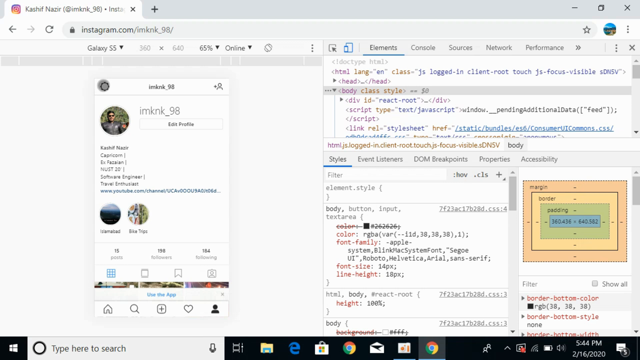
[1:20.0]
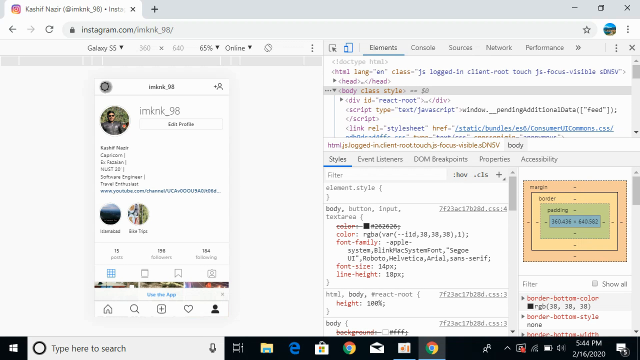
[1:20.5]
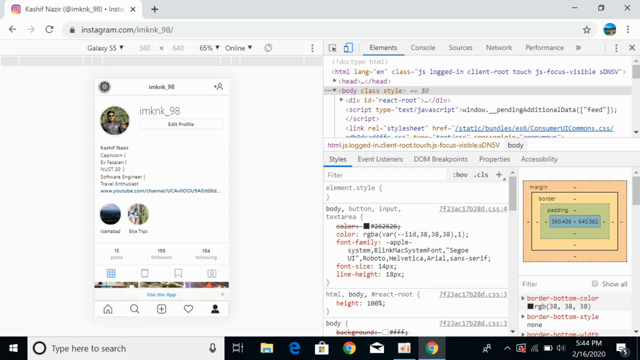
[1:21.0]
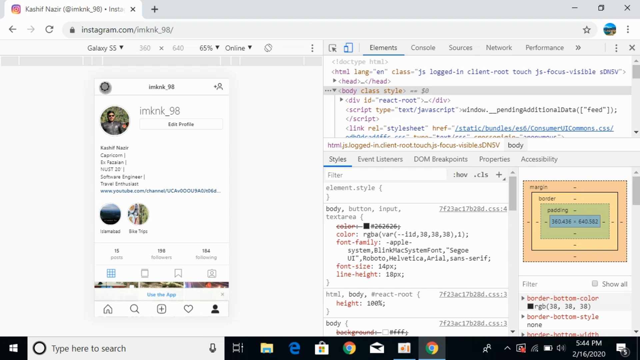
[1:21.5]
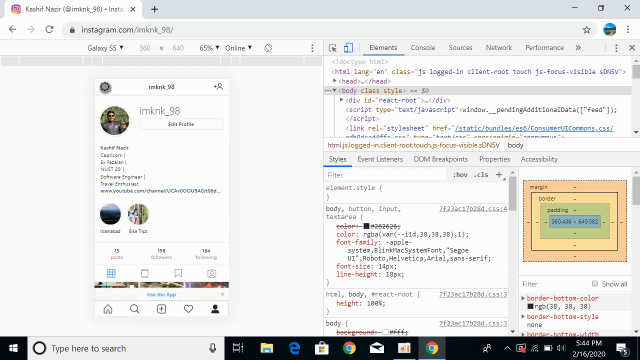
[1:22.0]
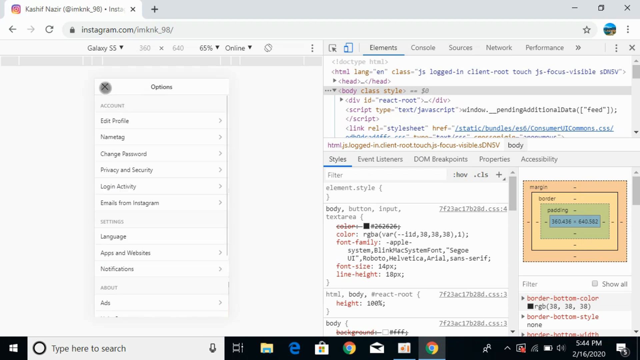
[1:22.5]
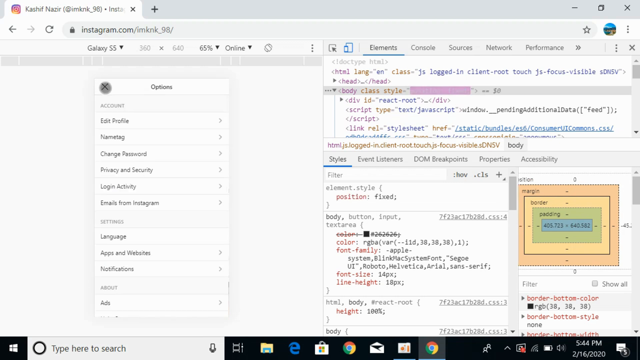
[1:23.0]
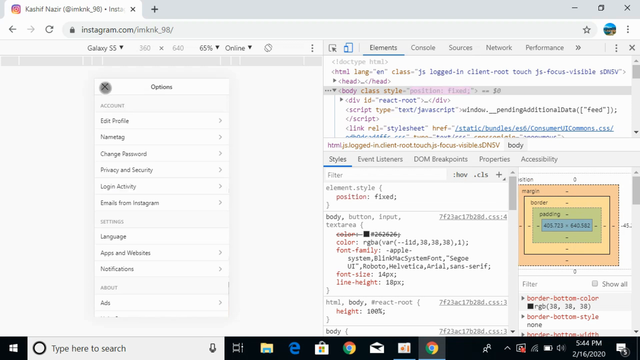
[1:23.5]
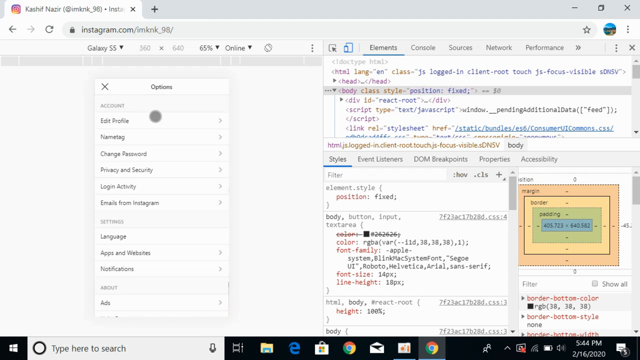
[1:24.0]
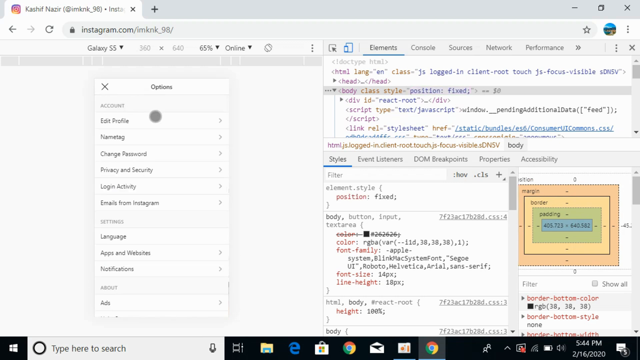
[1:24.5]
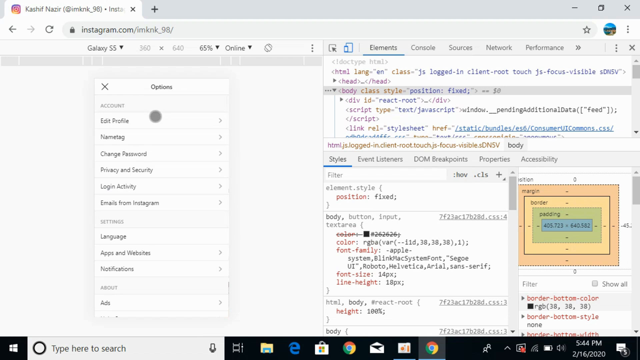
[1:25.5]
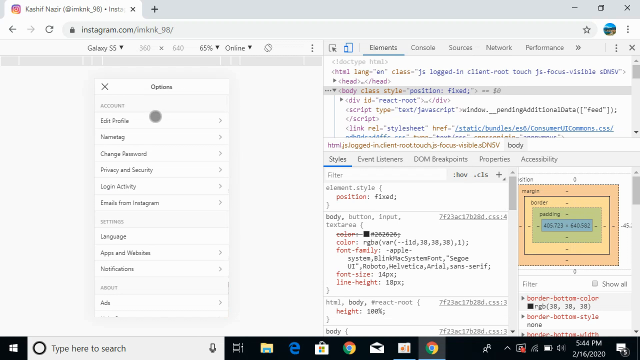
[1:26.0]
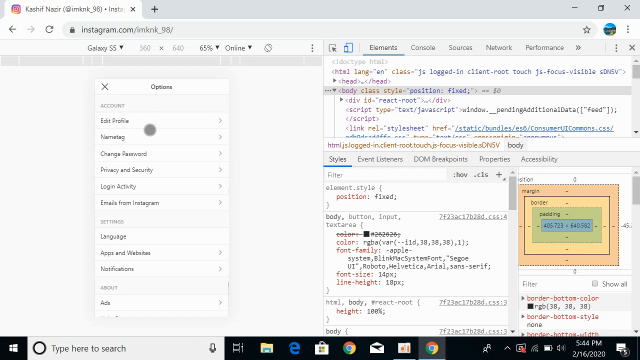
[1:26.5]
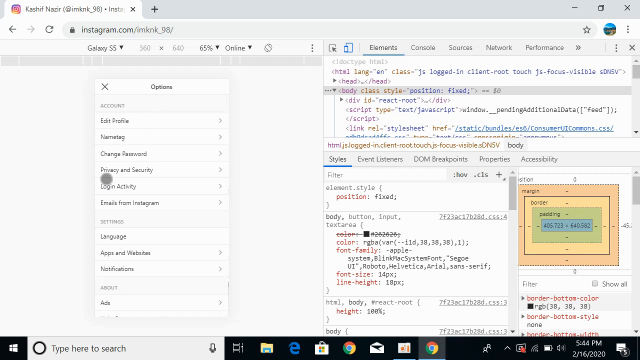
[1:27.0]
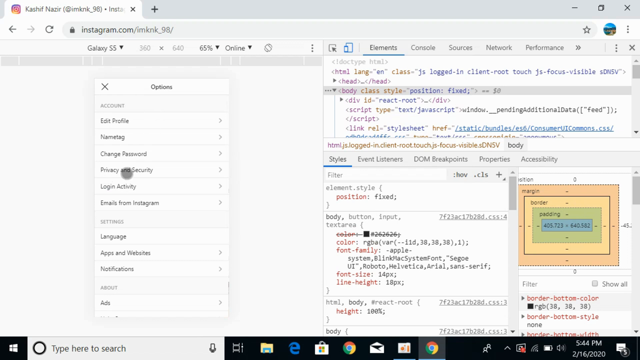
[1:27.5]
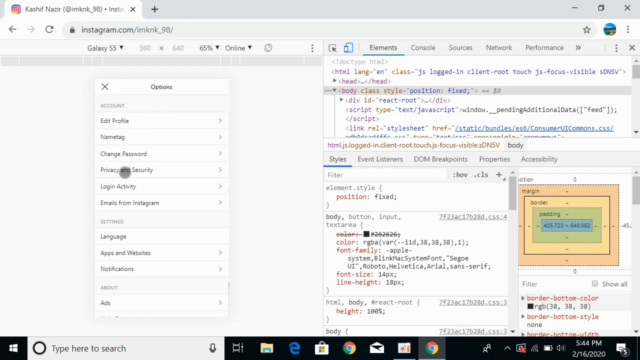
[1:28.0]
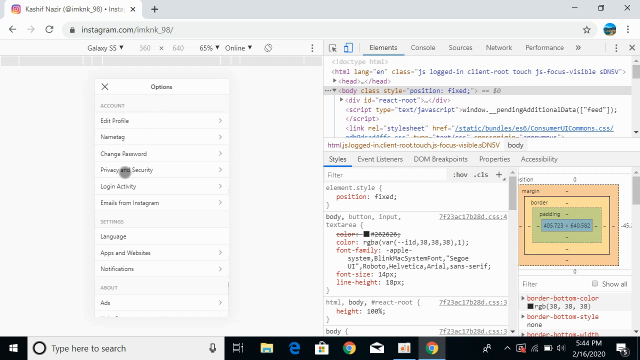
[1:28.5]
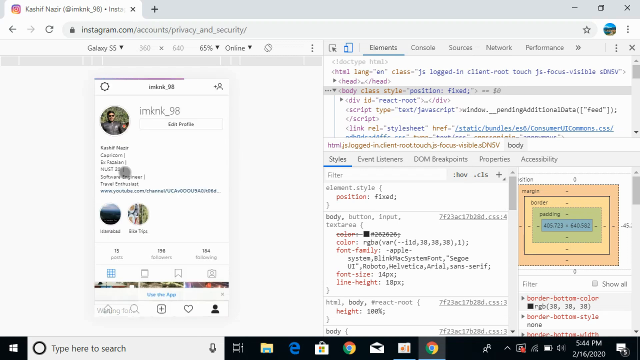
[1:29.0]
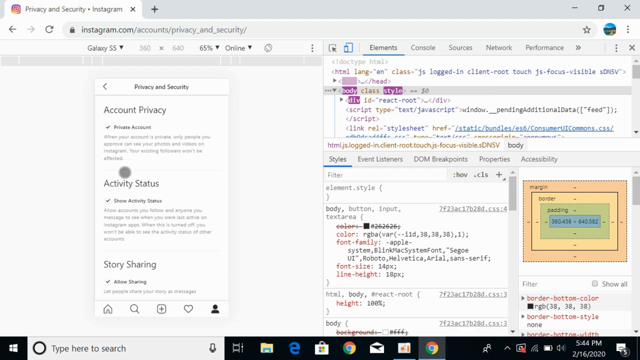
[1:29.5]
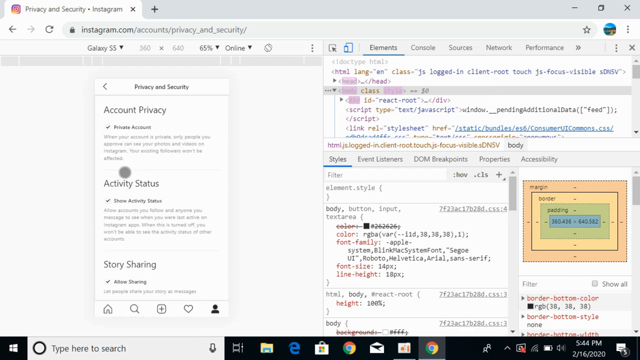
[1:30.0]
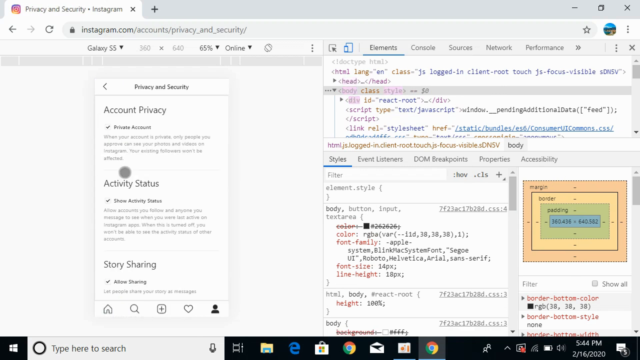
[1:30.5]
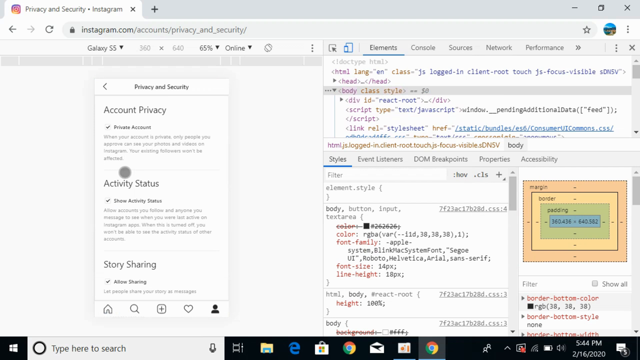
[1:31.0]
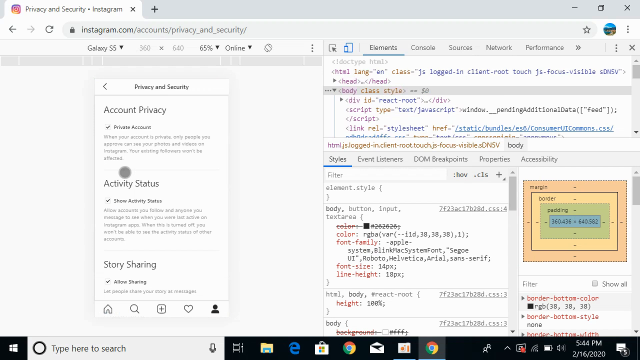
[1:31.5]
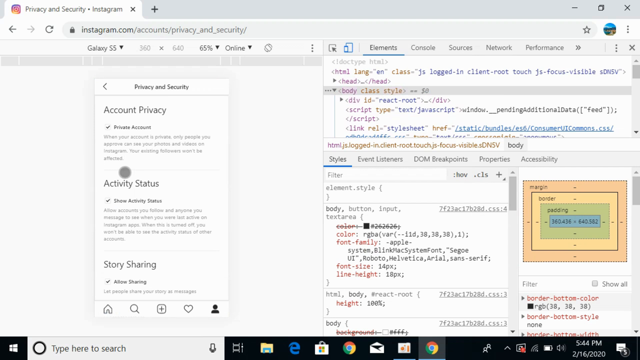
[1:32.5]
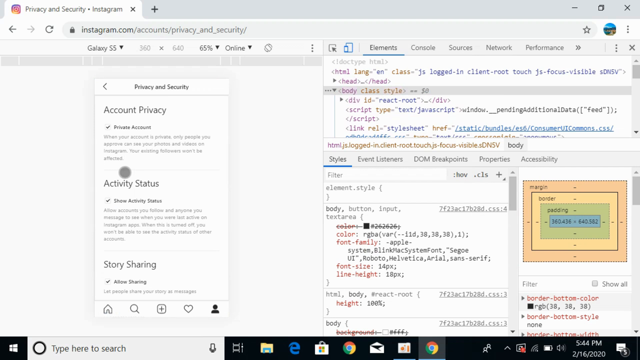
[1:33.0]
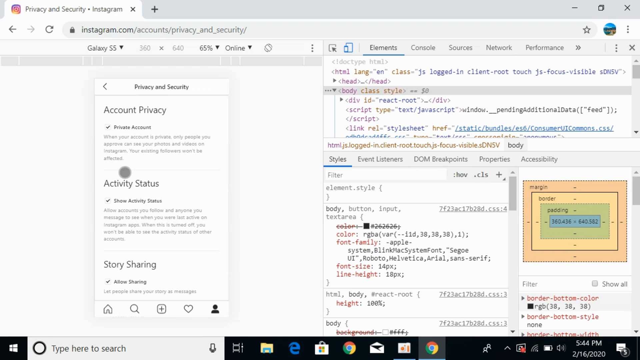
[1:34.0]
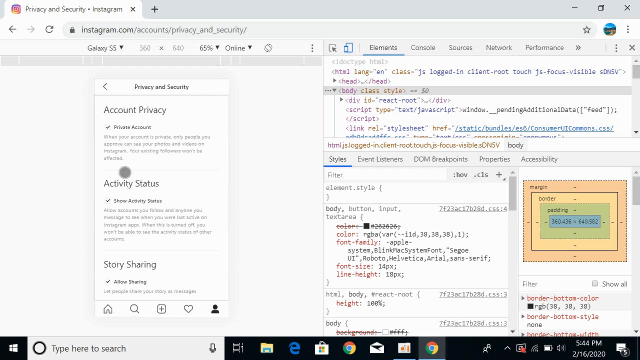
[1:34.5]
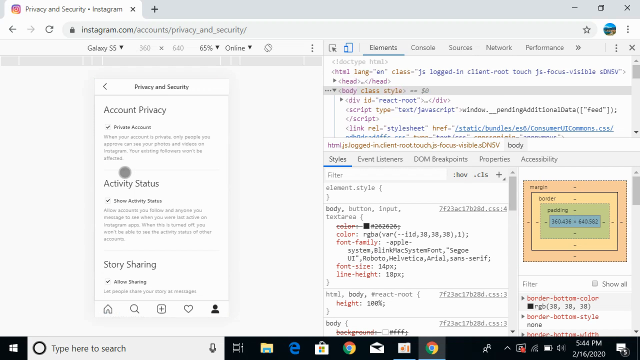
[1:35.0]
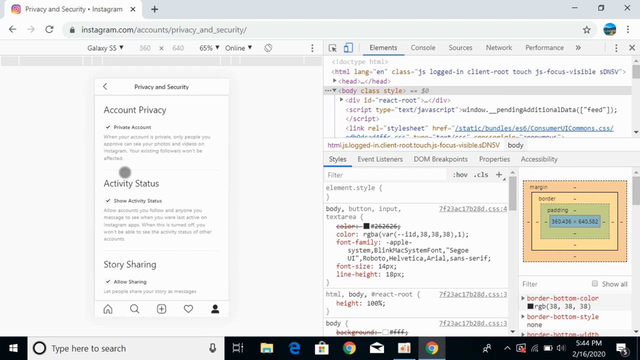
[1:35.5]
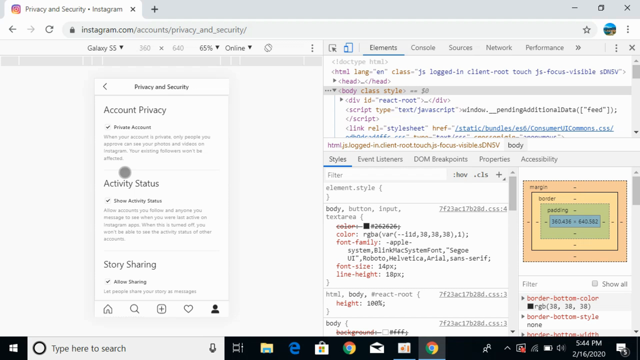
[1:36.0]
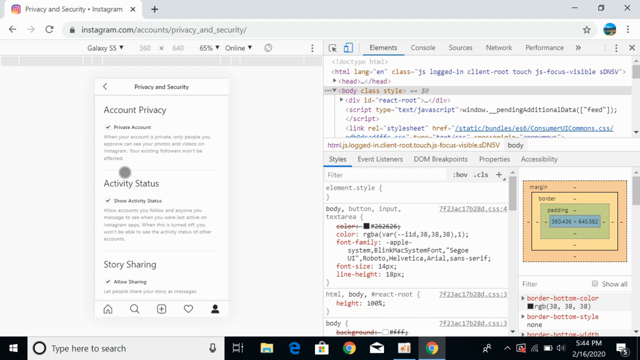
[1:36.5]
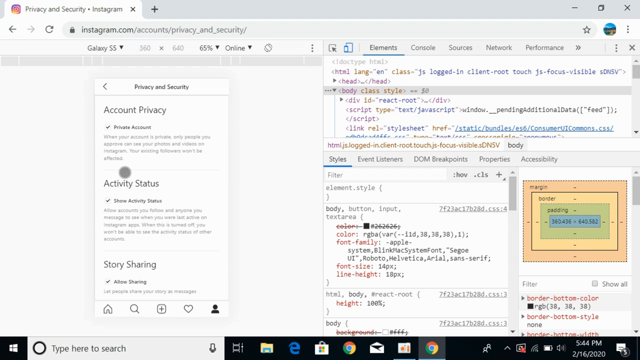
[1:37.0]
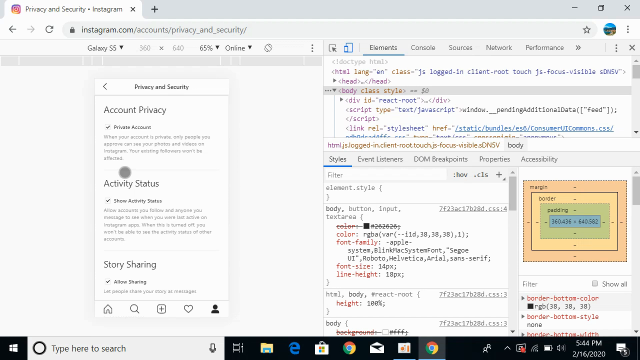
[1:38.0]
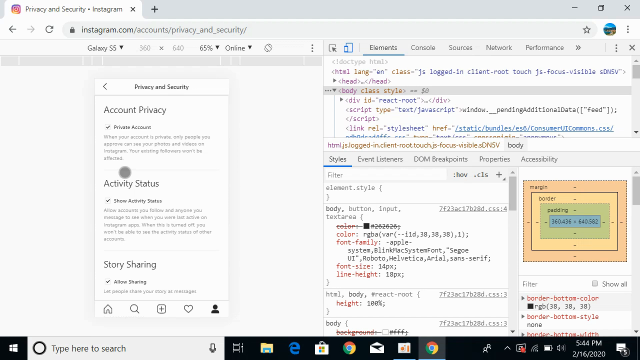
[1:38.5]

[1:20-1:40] A computer screen shows an Instagram profile of a man in his 40s on the left and the developer tools window on the right. The user clicks on the circle at the top left, and a drop-down menu of options appears: edit profile, changing password, privacy and security, emails, and login from email or from Instagram. The user clicks on Privacy and Security, which displays account privacy with a detailed description, followed by a detailed description of activity status and finally a detailed description of story sharing.